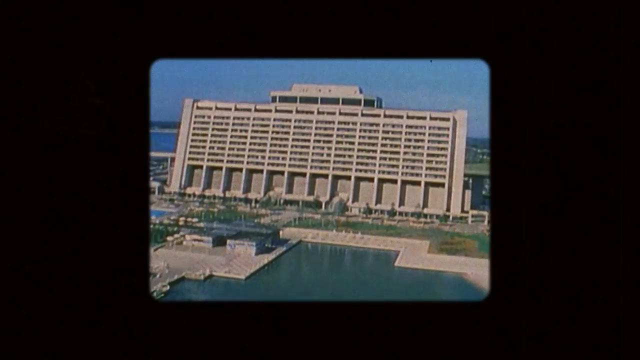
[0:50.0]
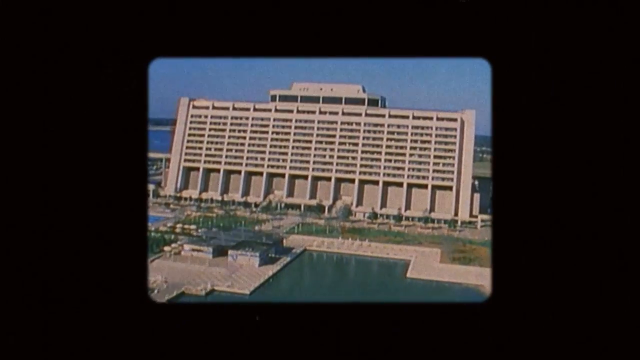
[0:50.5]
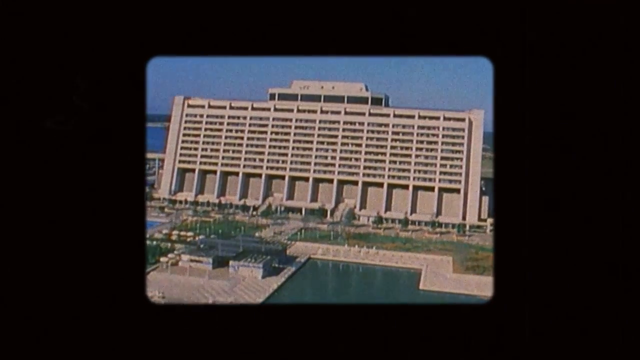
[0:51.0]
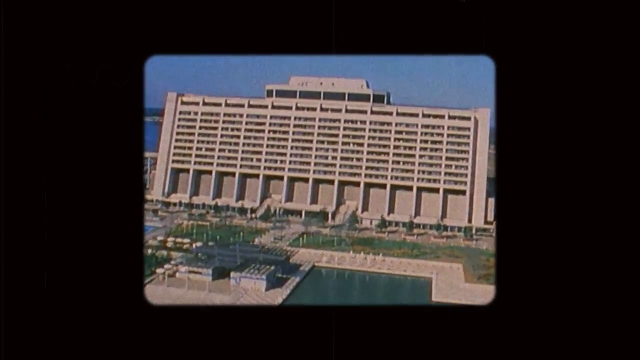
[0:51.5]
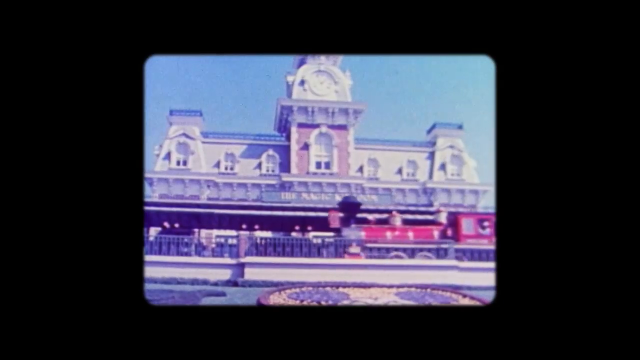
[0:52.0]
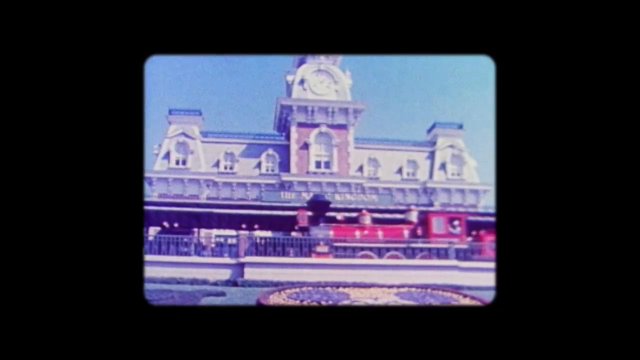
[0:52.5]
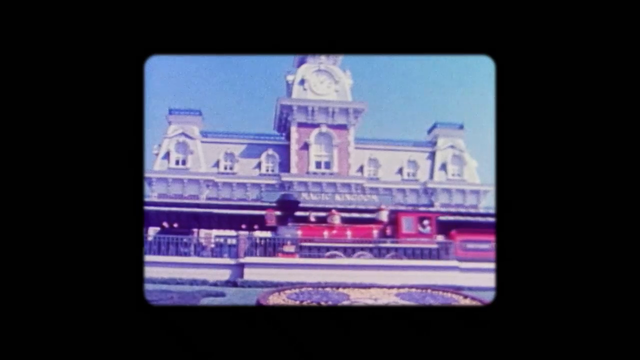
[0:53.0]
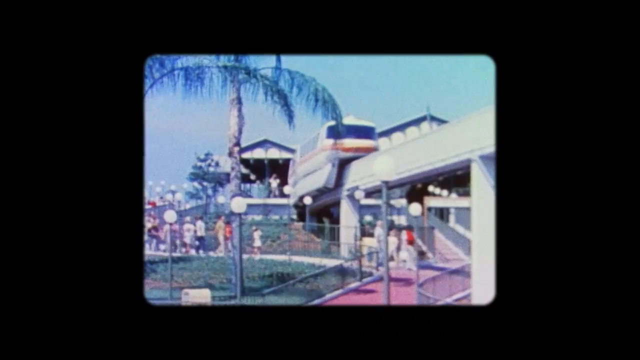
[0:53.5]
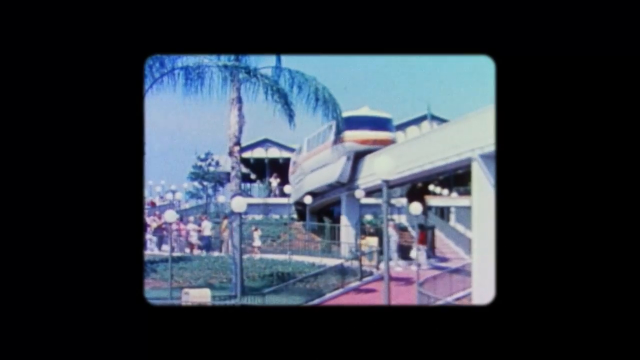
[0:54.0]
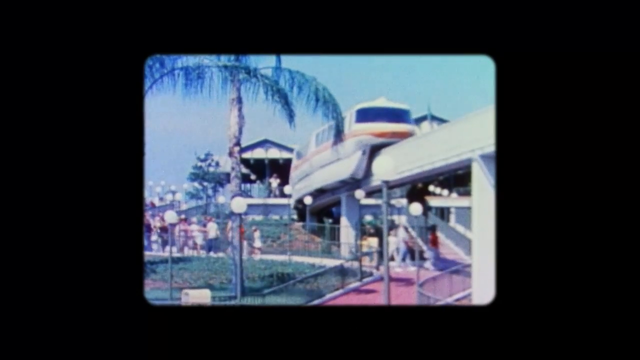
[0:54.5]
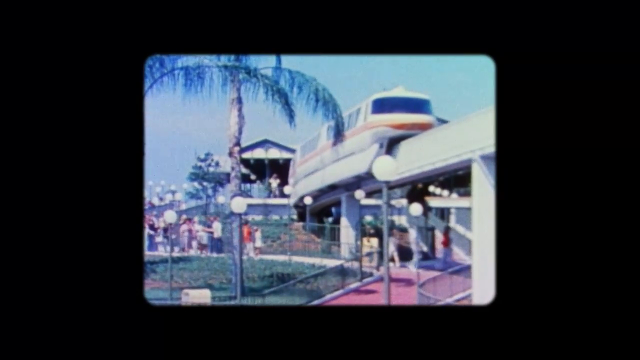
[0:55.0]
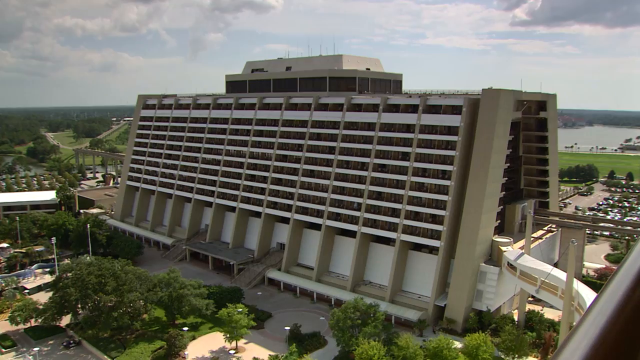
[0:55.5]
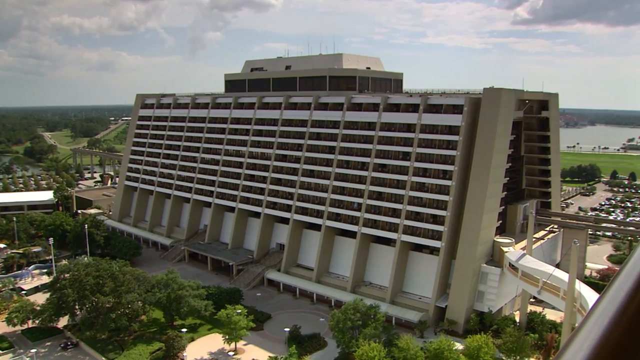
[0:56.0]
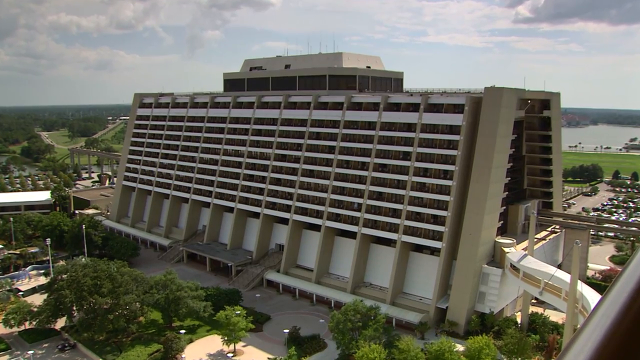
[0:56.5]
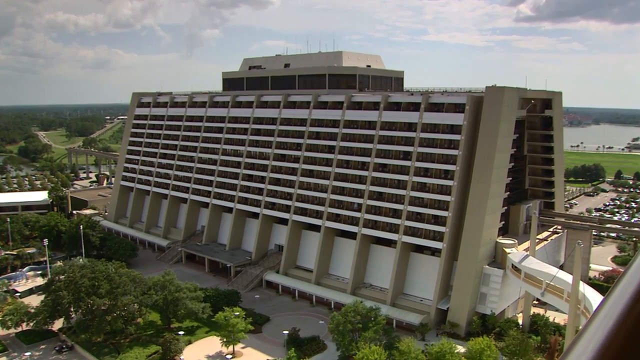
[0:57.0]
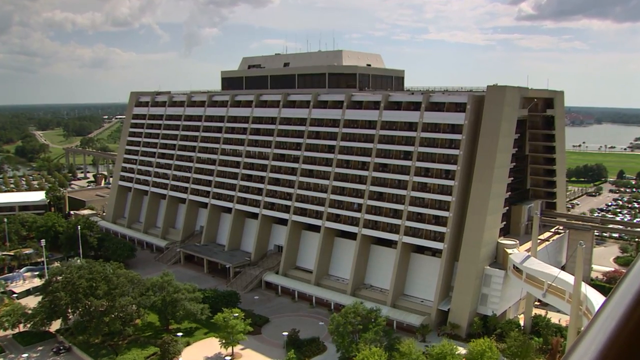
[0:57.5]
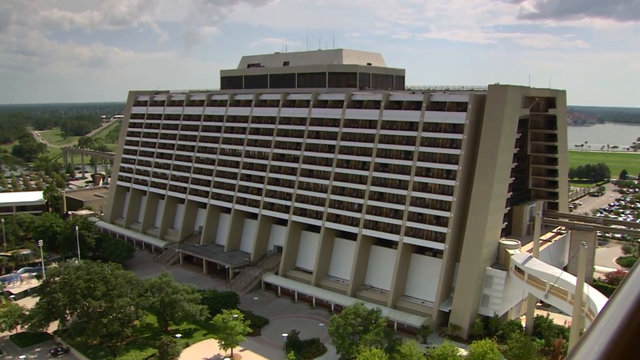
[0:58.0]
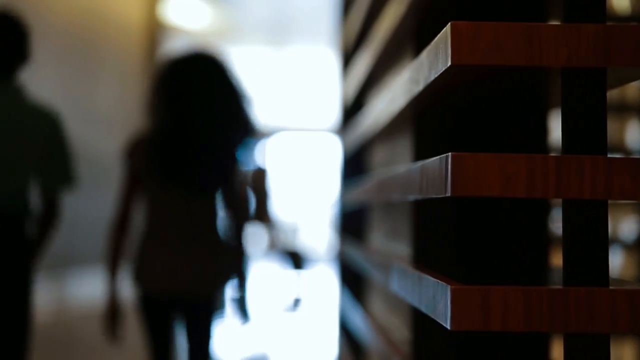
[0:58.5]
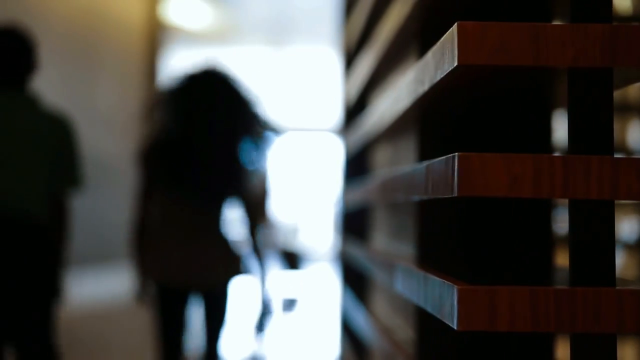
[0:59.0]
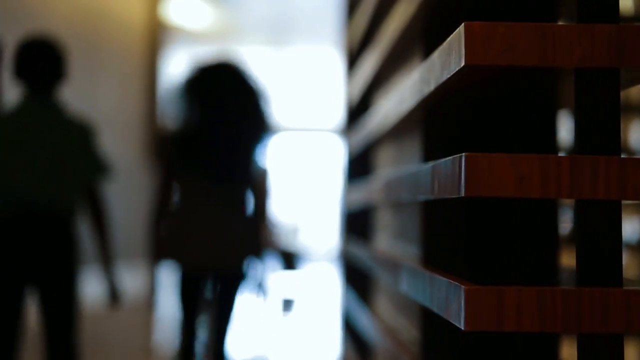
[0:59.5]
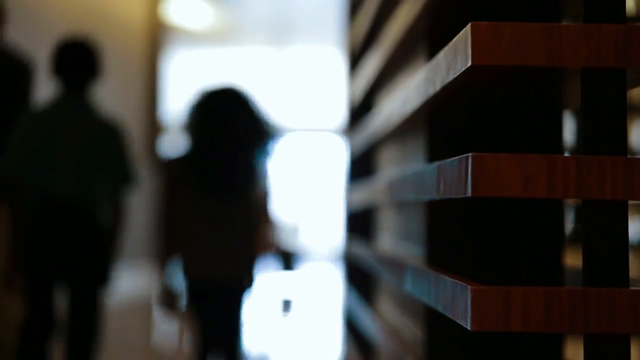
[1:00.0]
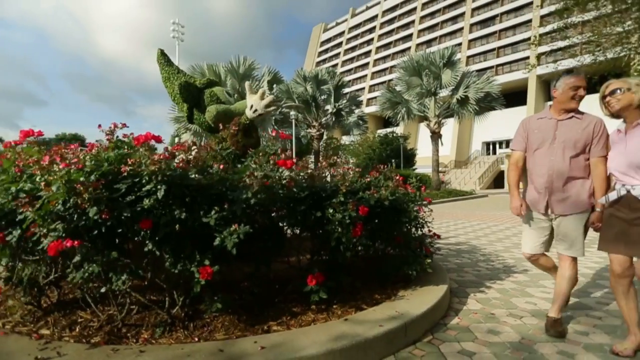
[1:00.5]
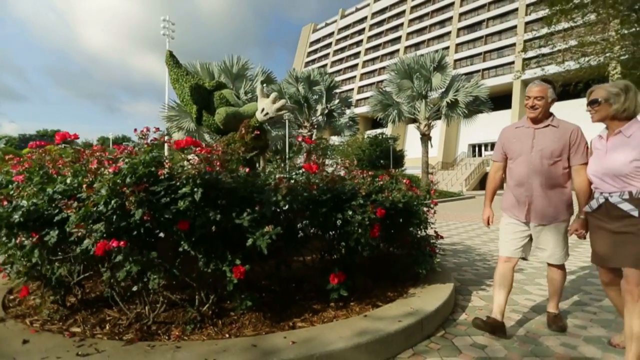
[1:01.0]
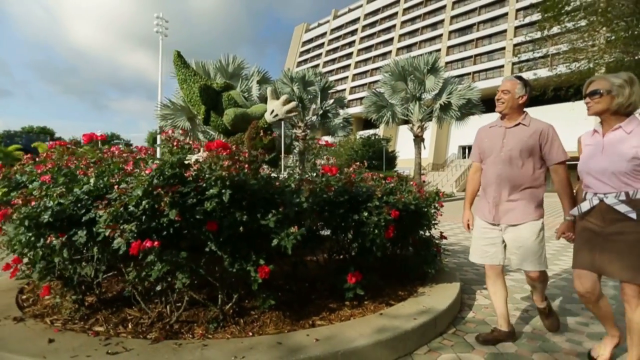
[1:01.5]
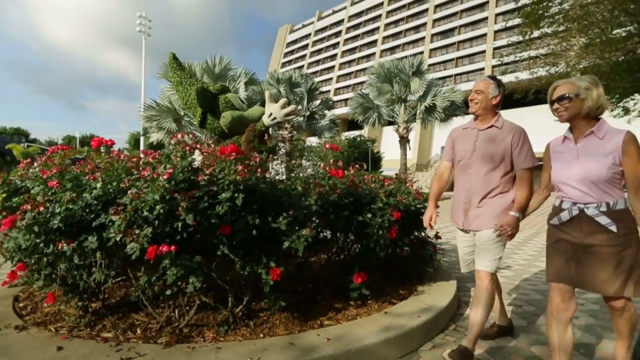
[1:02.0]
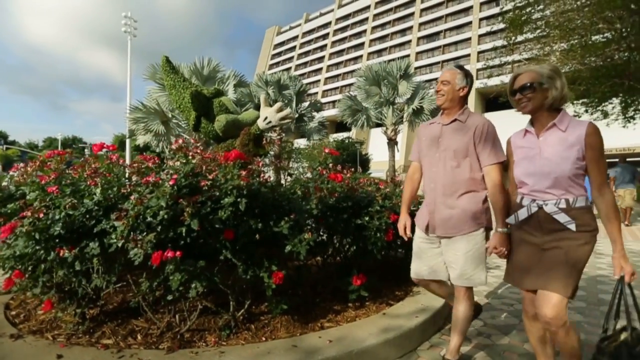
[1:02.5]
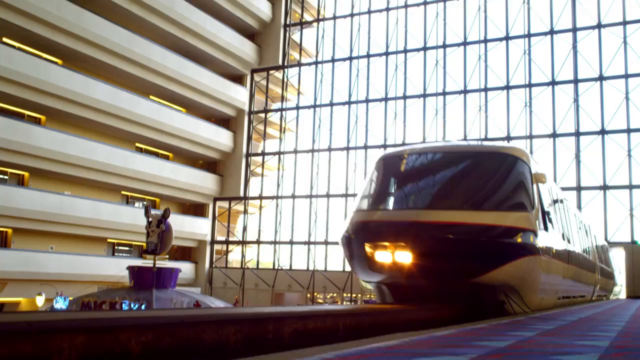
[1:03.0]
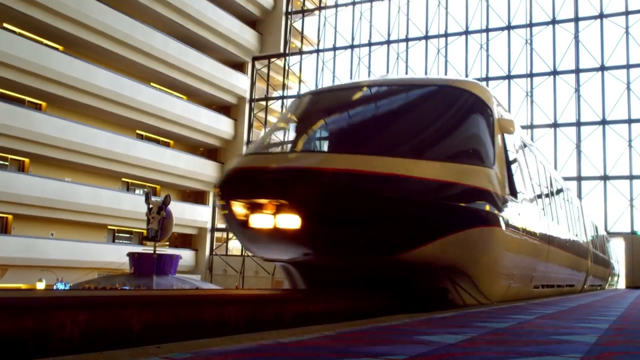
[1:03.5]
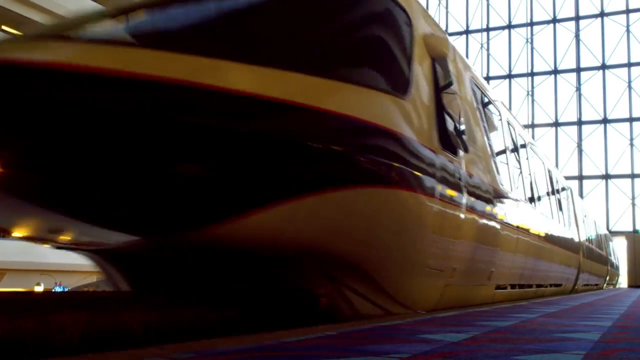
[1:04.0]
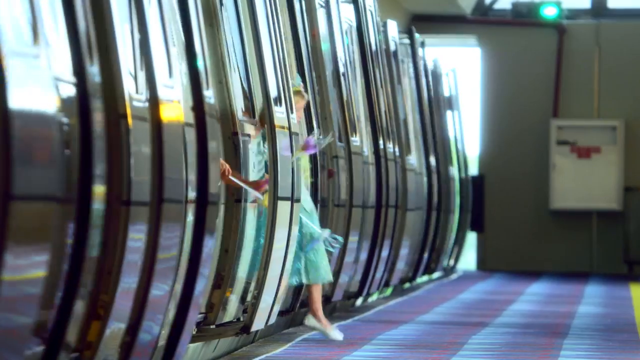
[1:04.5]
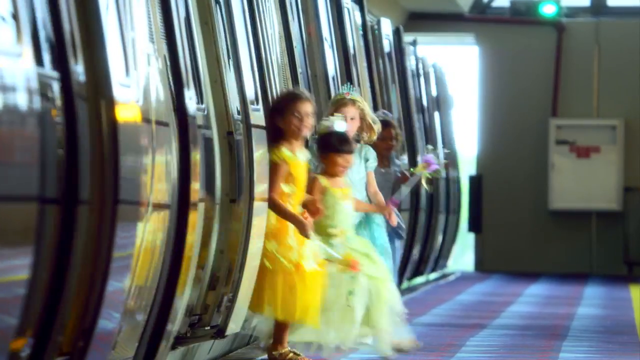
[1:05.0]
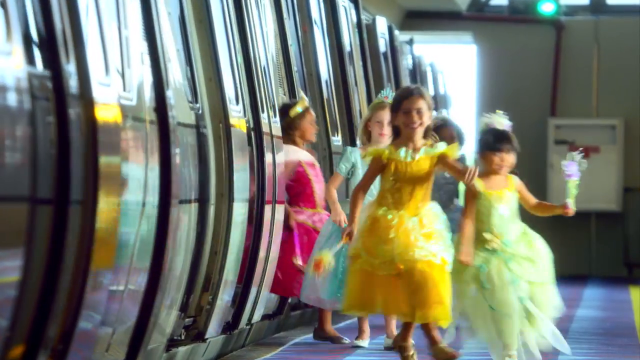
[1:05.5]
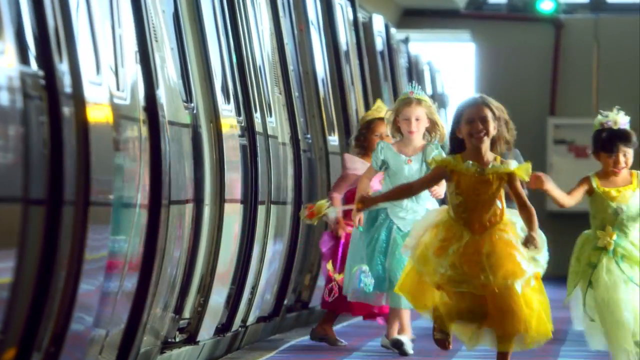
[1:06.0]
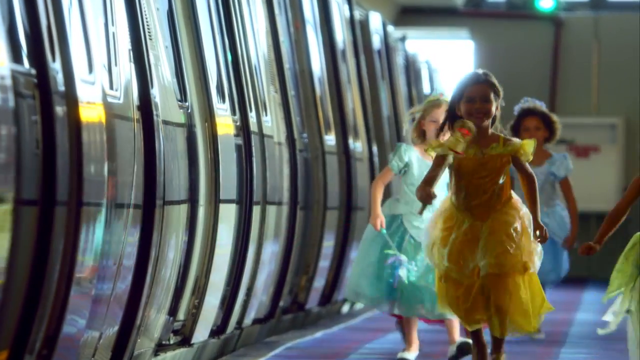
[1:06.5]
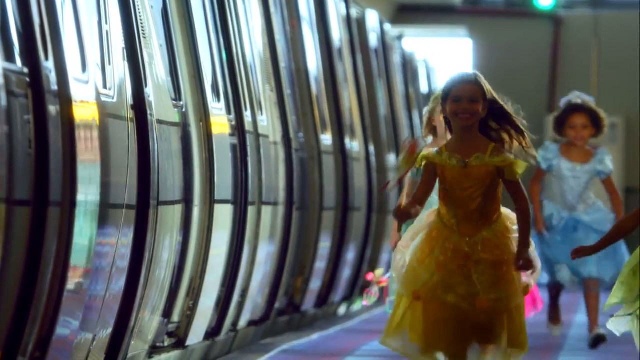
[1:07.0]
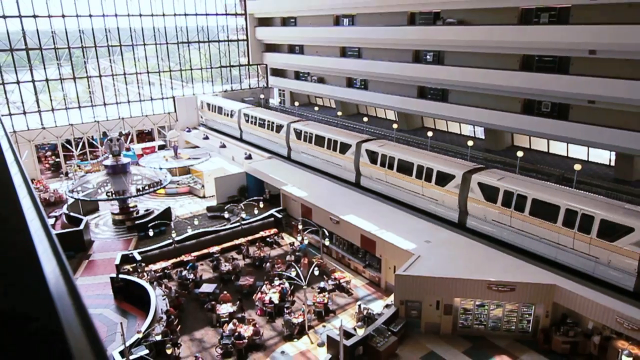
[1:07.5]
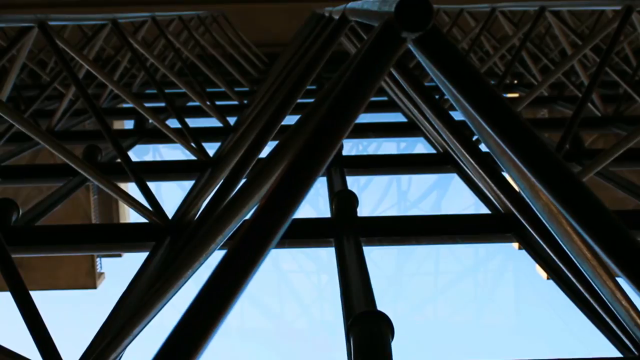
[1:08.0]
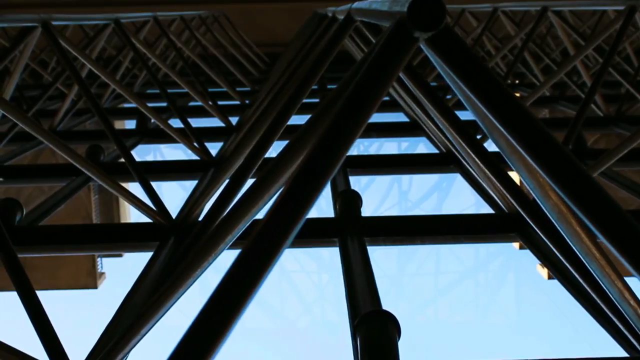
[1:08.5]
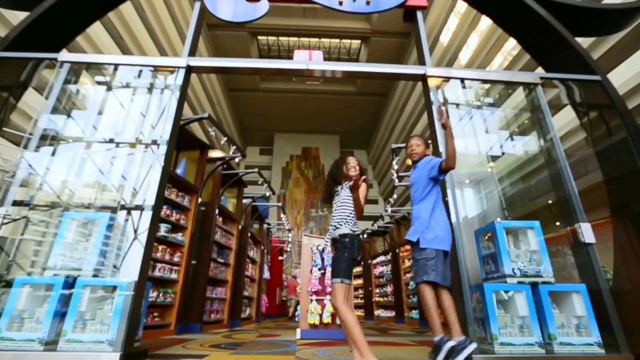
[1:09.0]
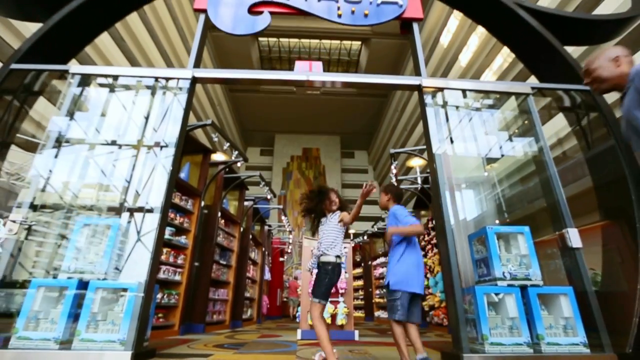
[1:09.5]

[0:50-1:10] Under the title "Disney's Contemporary Resort, Walt Disney World," an exterior shot of the resort that looks several years old appears, followed by 1970s footage of the train going in front of a Disney building and an older version of the monorail going through the park. A more modern clip shows the resort and two tourists walking around the grounds. A close-up shows the monorail entering the hotel lobby; as the doors open, about half a dozen young girls dressed in princess outfits come off the monorail. Children then walk into a Fantasia gift shop, waving for their family to follow. The video goes back and forth between older images and current images.